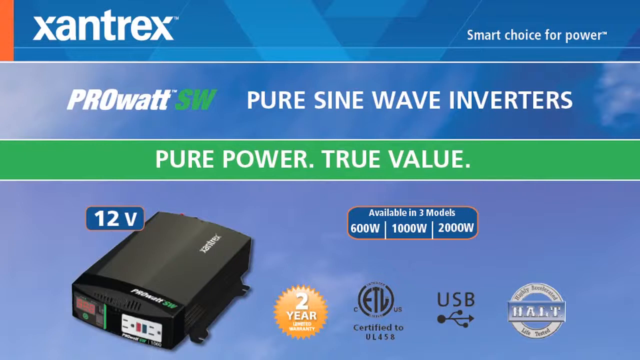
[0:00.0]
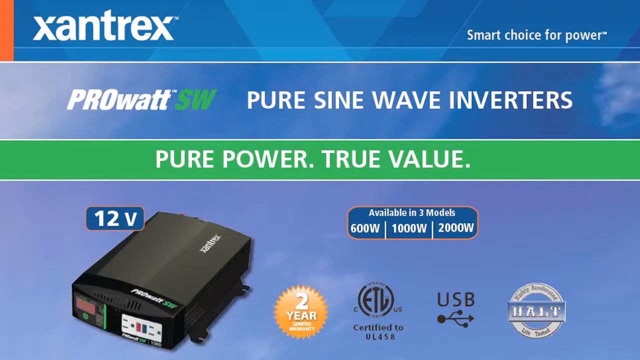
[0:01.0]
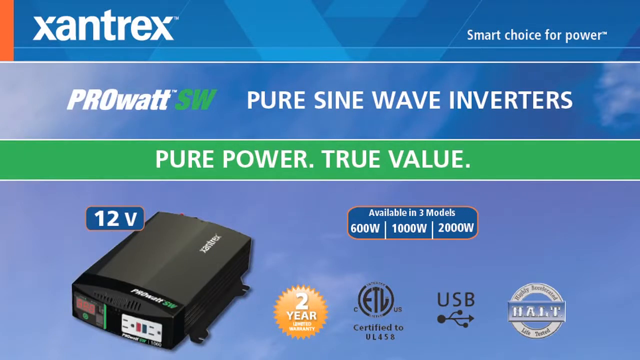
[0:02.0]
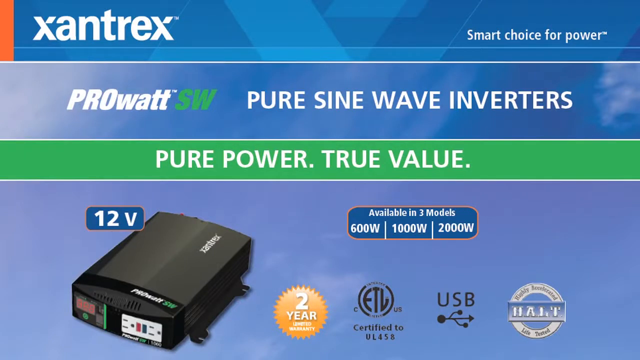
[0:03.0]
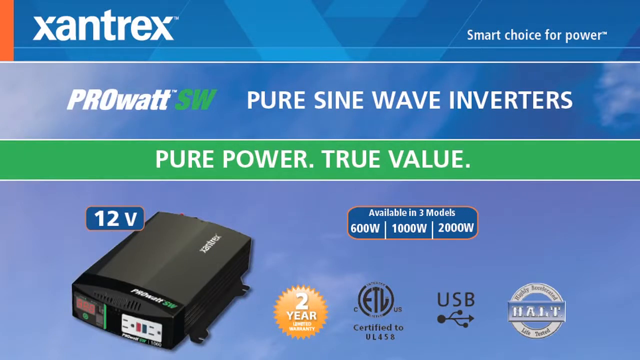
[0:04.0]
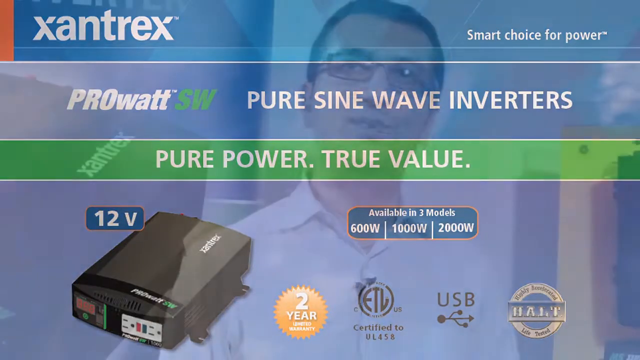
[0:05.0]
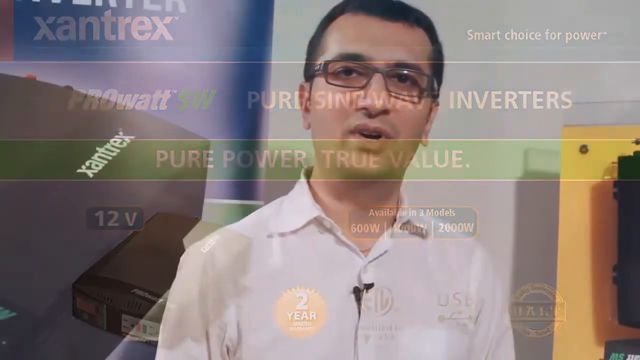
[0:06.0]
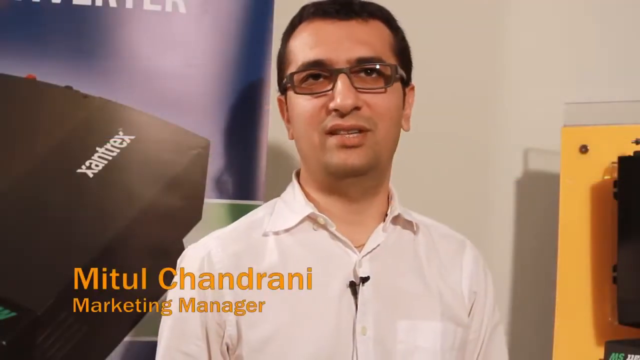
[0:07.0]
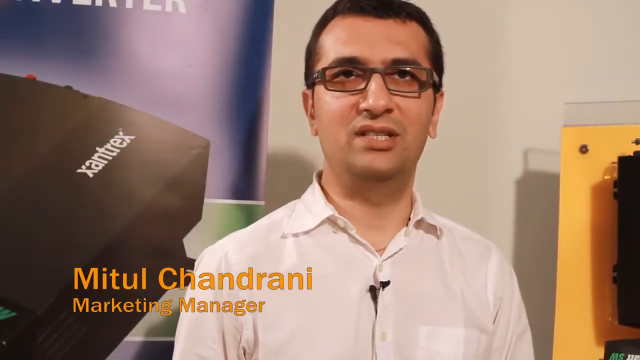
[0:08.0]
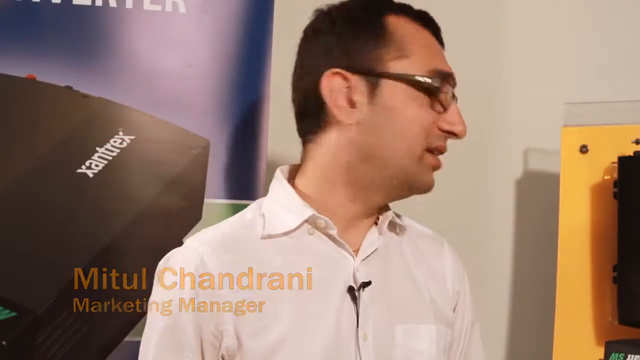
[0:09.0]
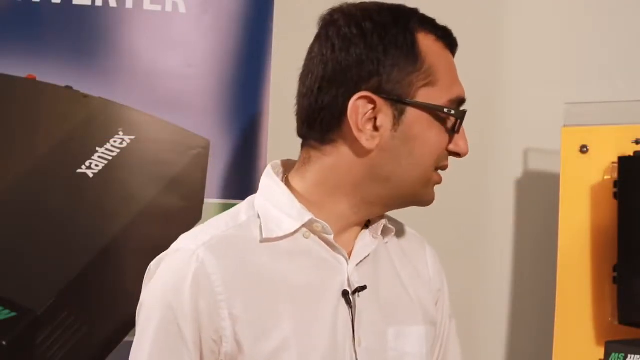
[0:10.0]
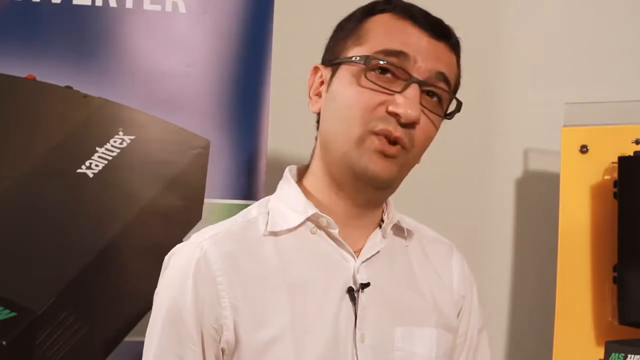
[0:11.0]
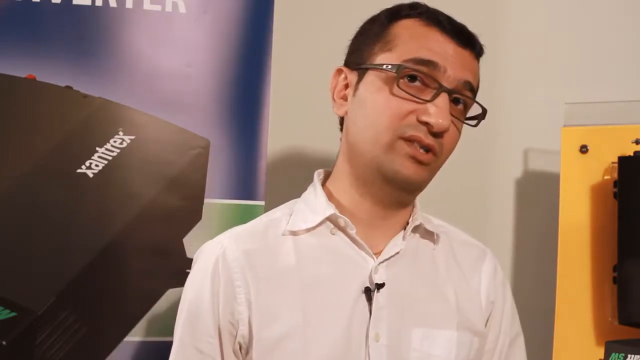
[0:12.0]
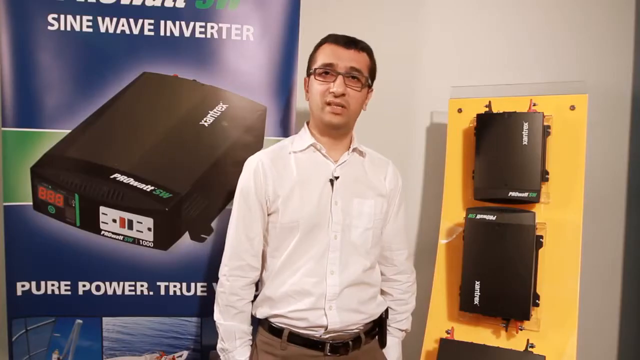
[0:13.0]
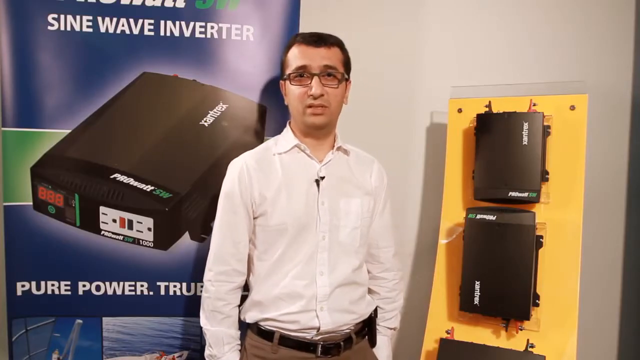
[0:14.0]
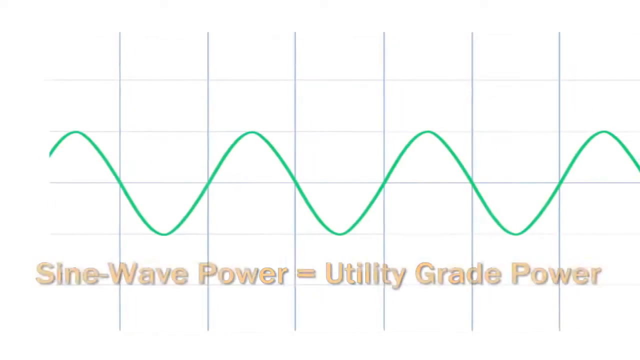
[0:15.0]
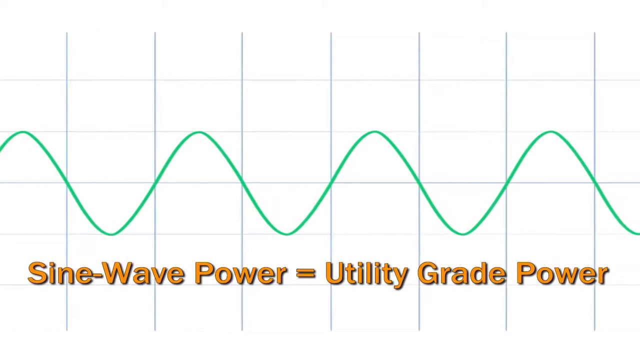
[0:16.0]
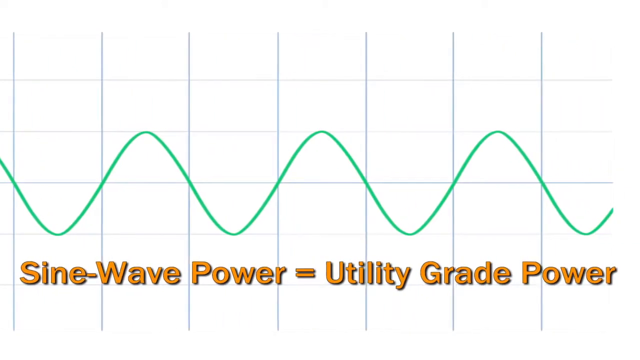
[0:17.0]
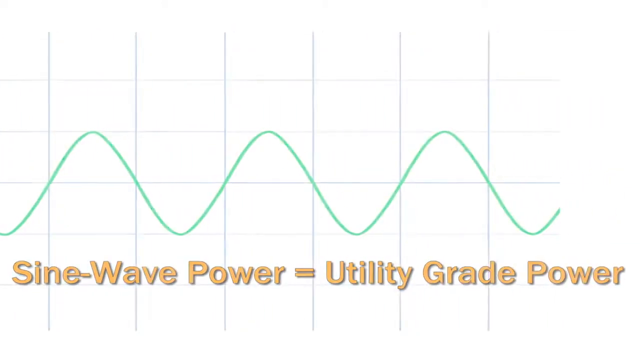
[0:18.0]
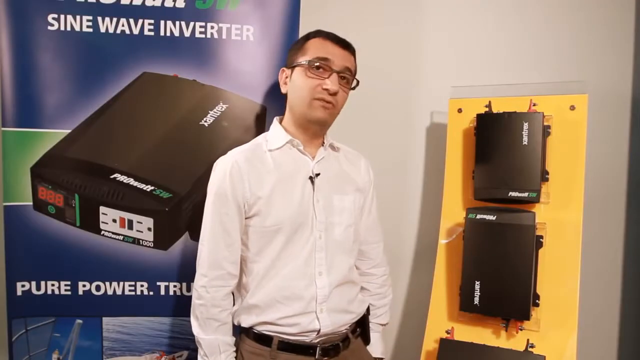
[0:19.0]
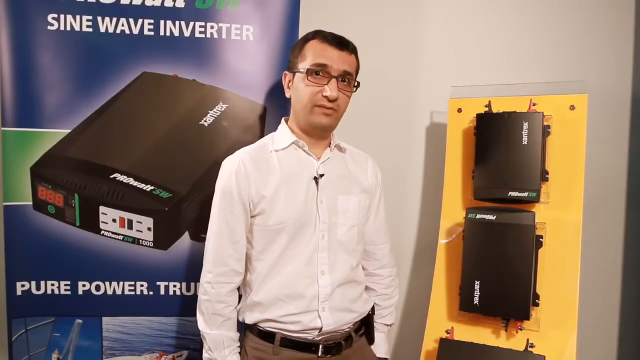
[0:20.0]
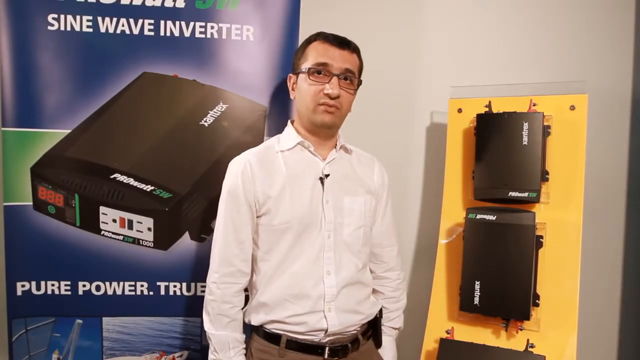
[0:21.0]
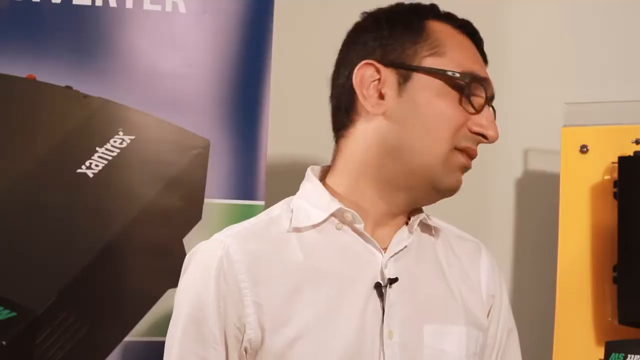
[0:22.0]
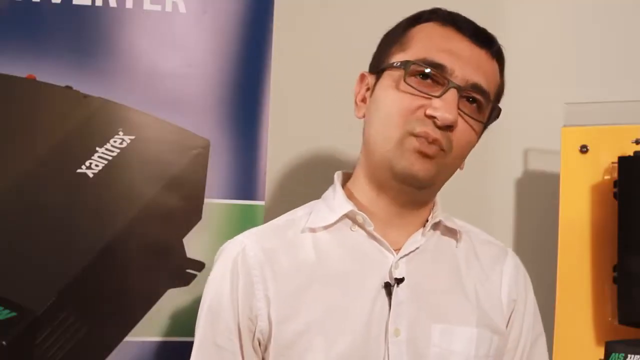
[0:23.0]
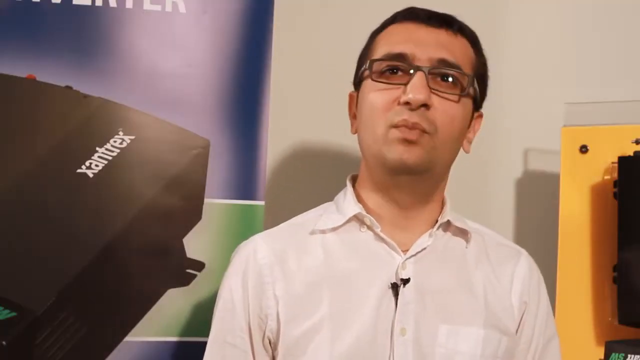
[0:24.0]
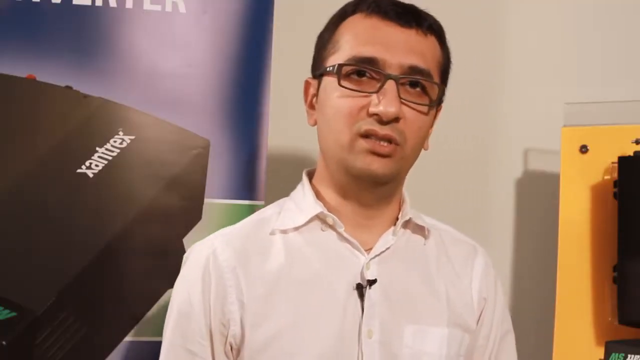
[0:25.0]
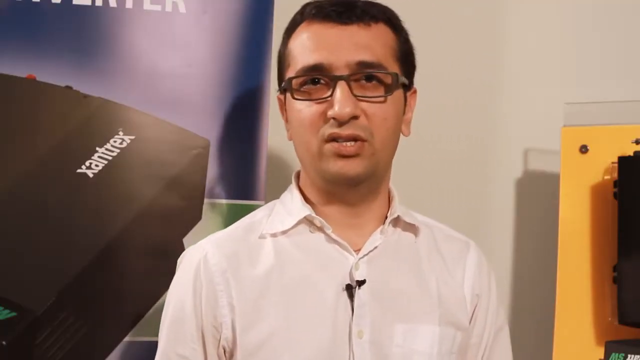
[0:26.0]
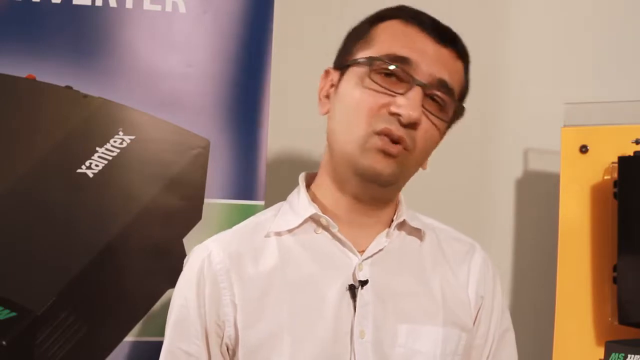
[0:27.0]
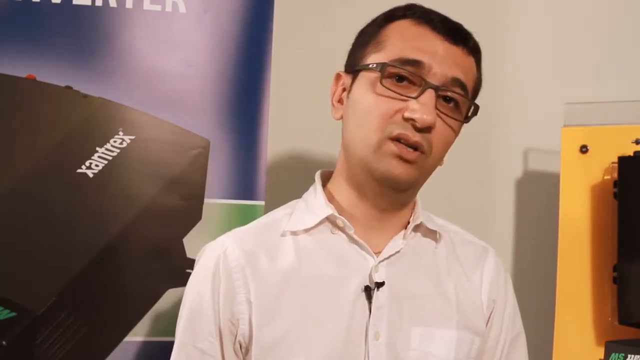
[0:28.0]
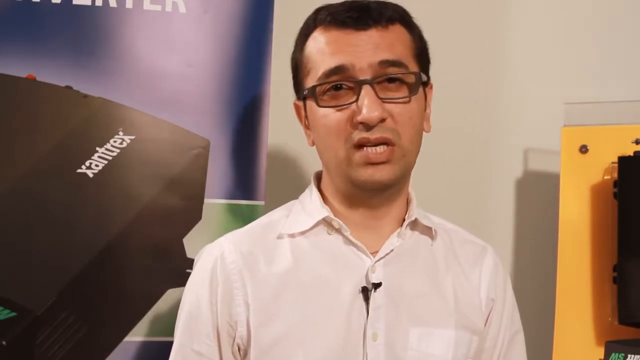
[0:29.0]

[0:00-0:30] The video opens on a picture of an advertisement. In the upper left corner it says "Xantrex," and on the right it says "Smart Choice for Power." Below that it reads "ProWatt SW" and "Pure Sine Wave Inverters," and below that "Pure Power. True Value." It also shows "12 volt," "Available in three models," "600 Watt," "1000 Watt" and "2000 Watt," along with a two-year warranty. A man appears, Mitul Chandrani, a marketing manager, with glasses, brown hair and light brown skin. He stands against a wall with Xantrex on one side of him and something else on the other side, and he keeps looking at the Xantrex. Two of the units, models or examples, are mounted on a yellow board. He wears a long white-sleeved shirt with one button open and a microphone on the shirt, and he appears to be wearing a necklace of some sort. He talks to the camera. A graphic then shows "sine wave power equals utility grade power" with a green wave going up and down across the page. He comes back on camera and continues talking. On the left "pure power" is visible, up top the sine wave inverter logo, and then the actual ProWatt SW: it has two plugs and a screen on the left for numbers, and it is mostly black. The man keeps talking to the camera.